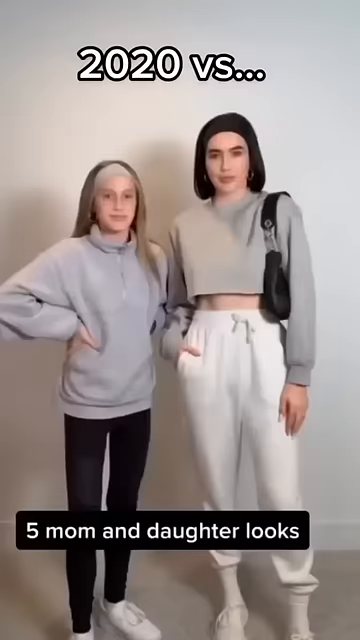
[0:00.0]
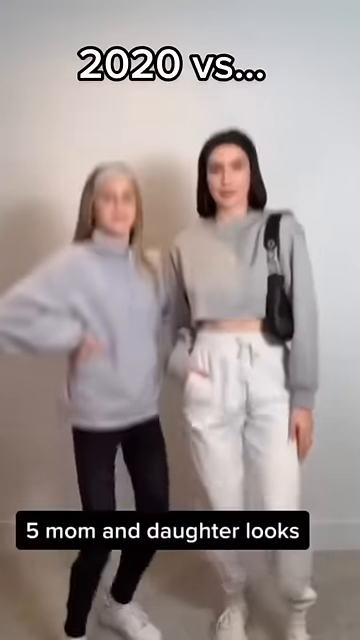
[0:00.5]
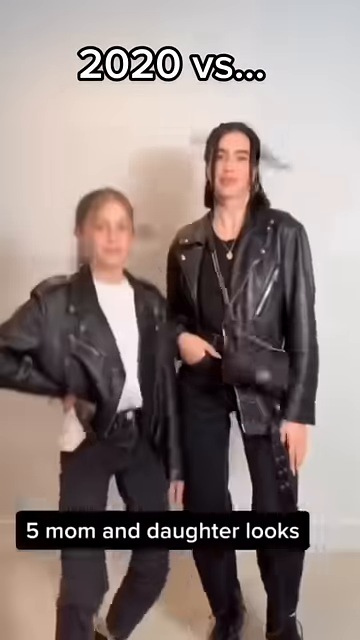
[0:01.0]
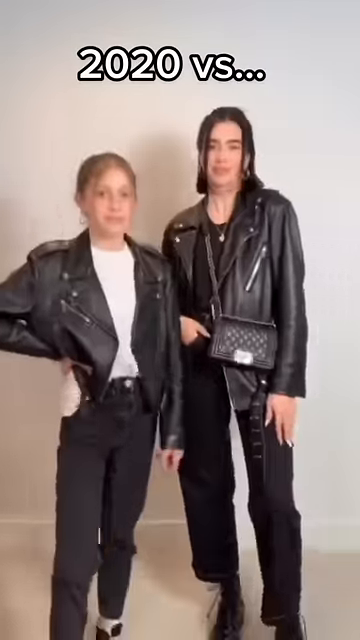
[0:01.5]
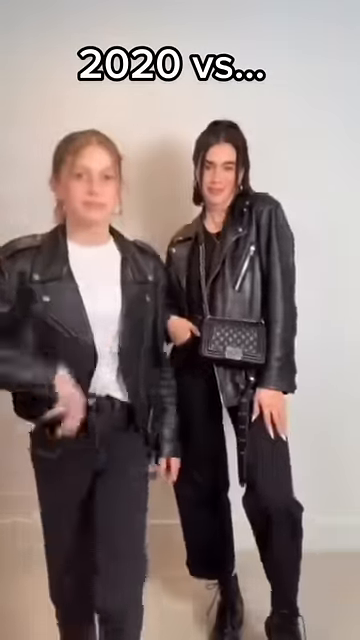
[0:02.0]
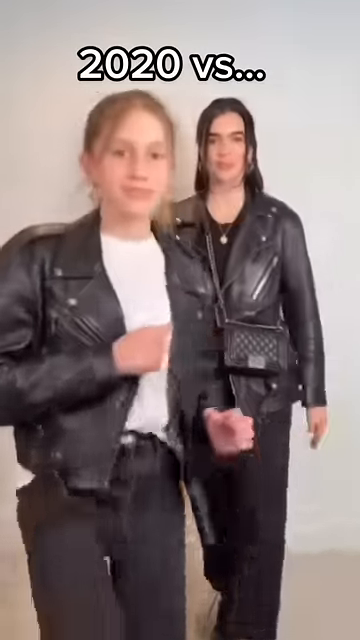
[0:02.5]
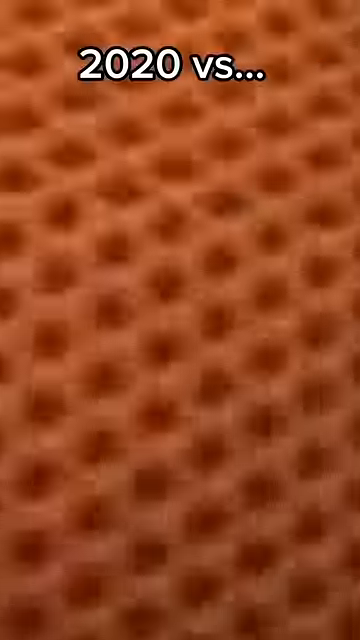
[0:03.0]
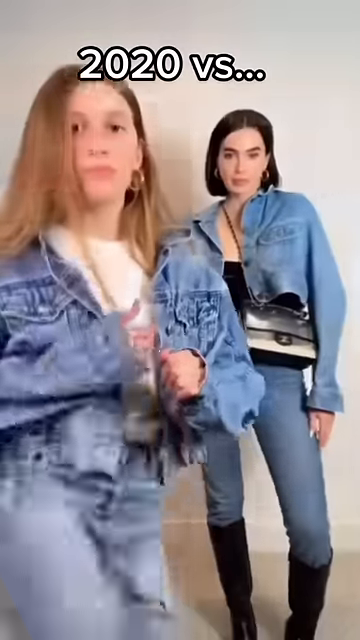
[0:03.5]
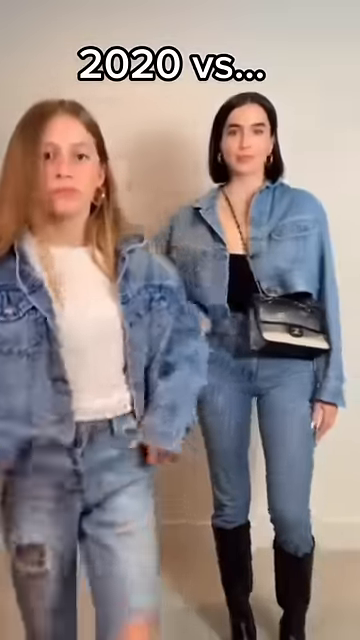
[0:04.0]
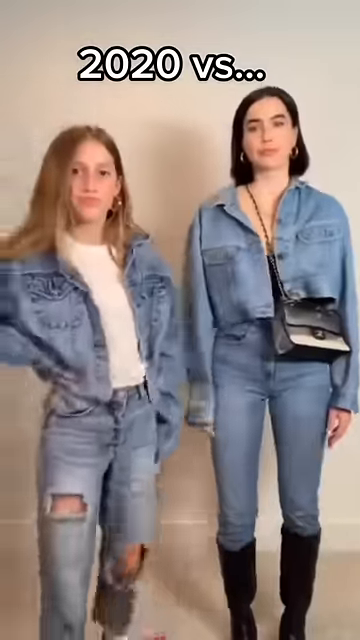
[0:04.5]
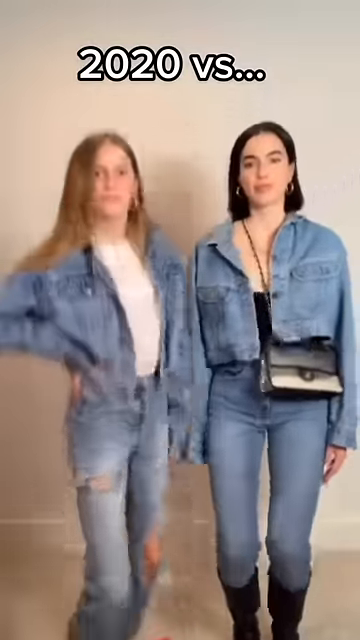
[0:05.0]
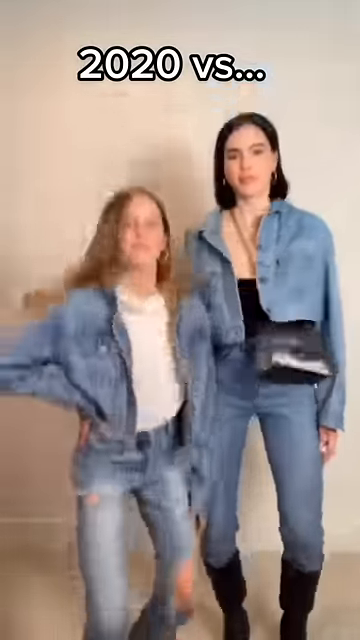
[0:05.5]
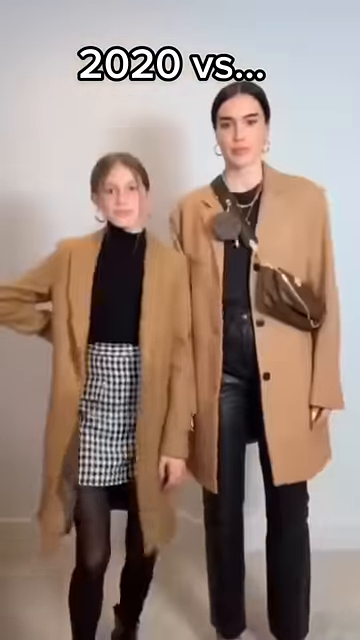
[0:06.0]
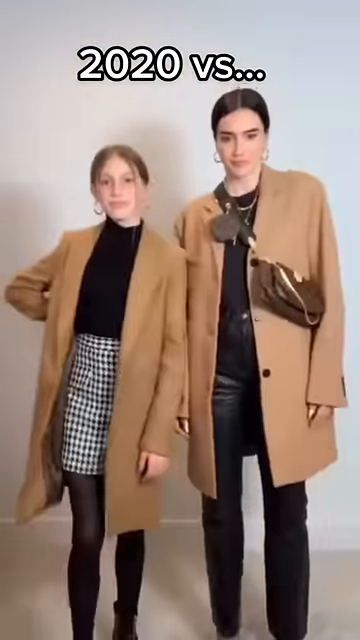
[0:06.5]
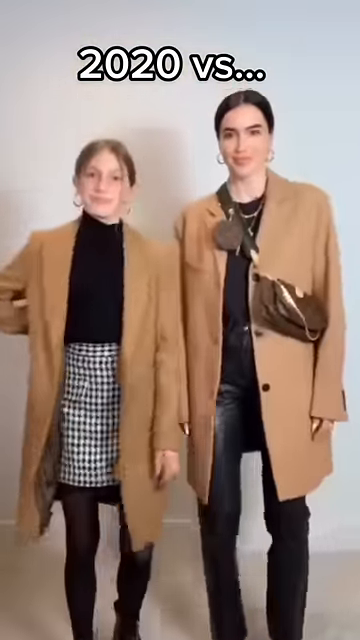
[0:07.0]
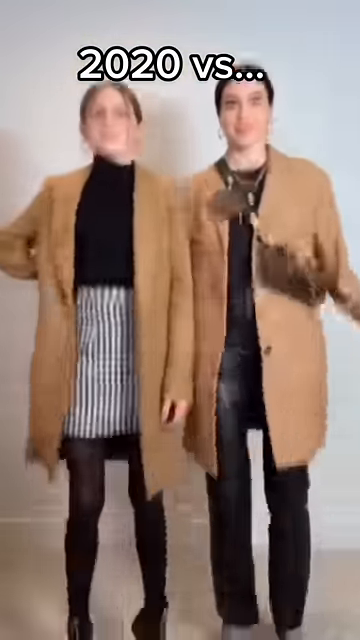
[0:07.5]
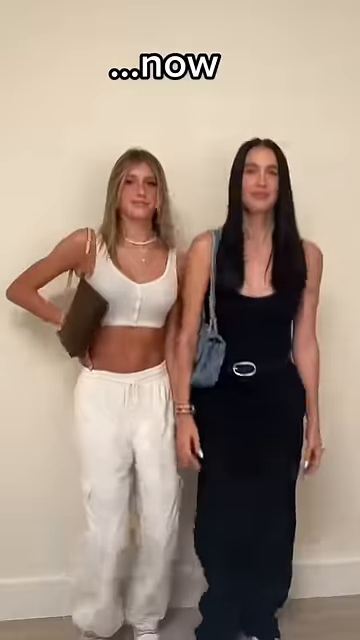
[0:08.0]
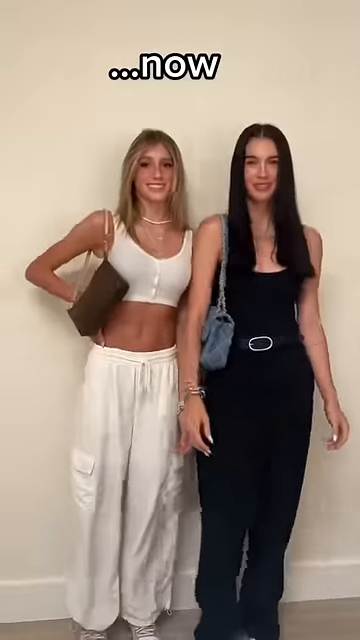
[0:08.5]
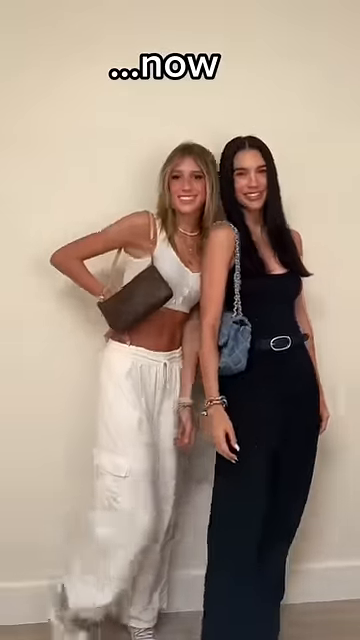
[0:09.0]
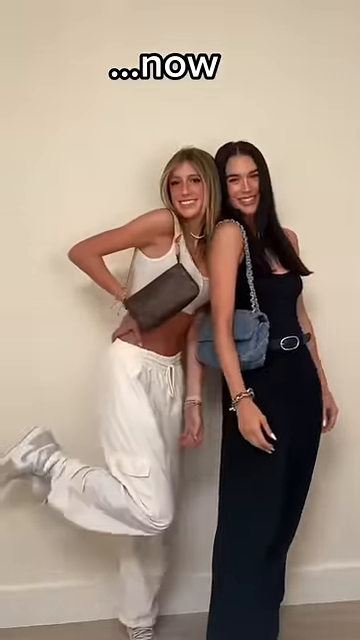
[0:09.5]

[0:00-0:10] Text at the top of the video reads "2020s then", with nothing after it, and text at the bottom reads "five mom and daughter looks". At the very beginning, two women, one a bit younger, are dressed in leggings, joggers, sweatshirts and similar clothes. They jump in the air, and then they appear in black jeans and leather jackets. The shorter woman wears a white t-shirt underneath, while the other woman appears to wear a black t-shirt underneath and carries a black crossbody bag. The shorter woman puts her foot up in front of the camera as if kicking it, and next the two are dressed in denim: denim jeans and denim jackets with t-shirts underneath, along with what looks like perhaps the same black crossbody bag. They jump again and are now dressed in beige wool pea coats, or perhaps slightly longer car coats, with black and white outfits. The younger woman wears a black and white checkered skirt, a black mock turtleneck, black stockings and boots. The older woman wears a black top under her coat and what looks like black leather pants, and carries a brown crossbody bag. They jump once again, and at the very end they wear apparently more modern items, as if going out on the town for the day. The shorter woman has gotten a bit older; this is apparently the "now" part referred to at the top. She wears all white: a white crop top and white pants. The other woman is all in black, with a black camisole.